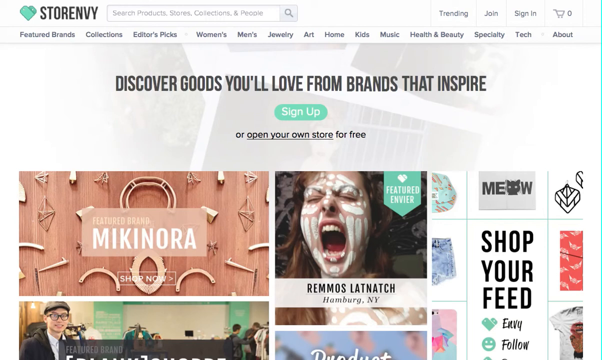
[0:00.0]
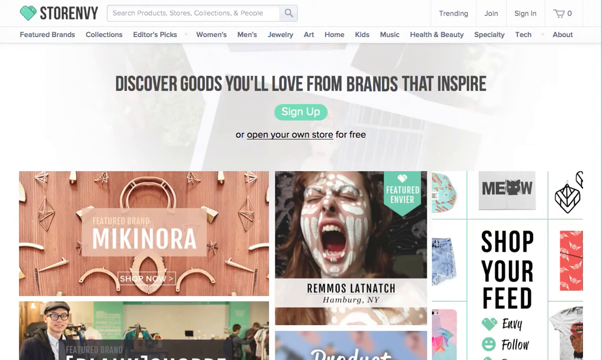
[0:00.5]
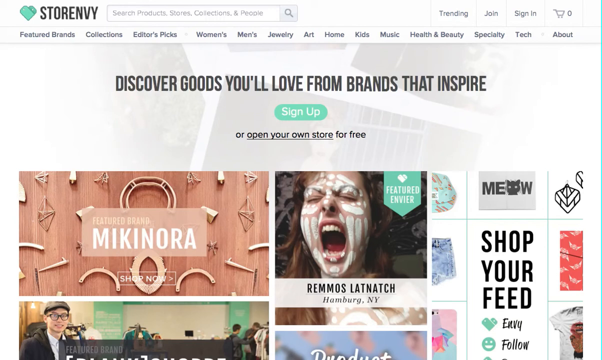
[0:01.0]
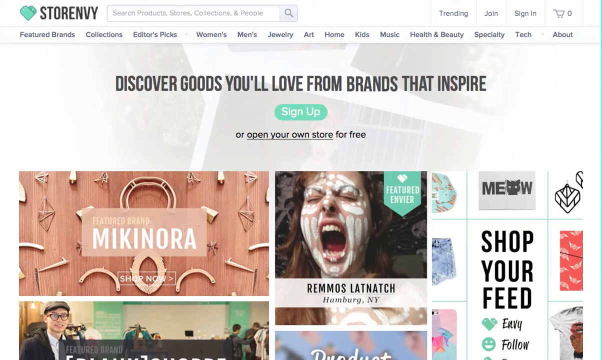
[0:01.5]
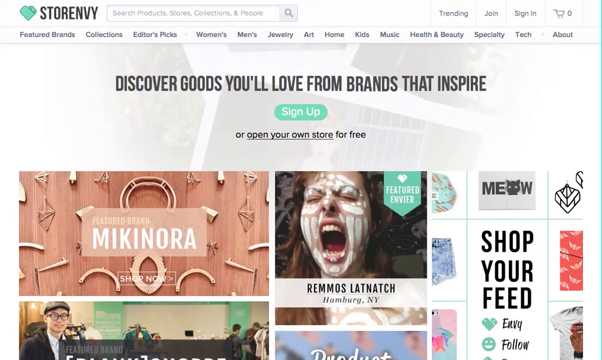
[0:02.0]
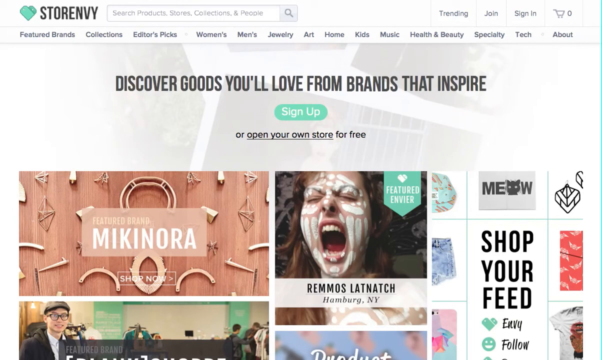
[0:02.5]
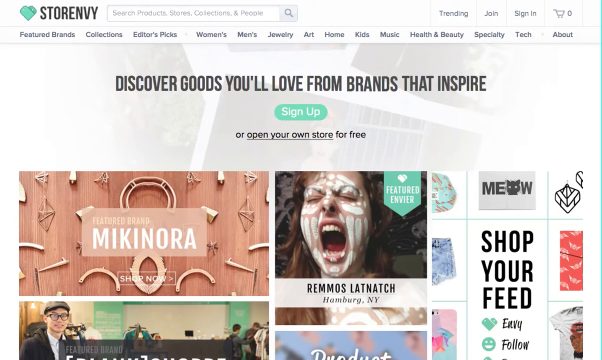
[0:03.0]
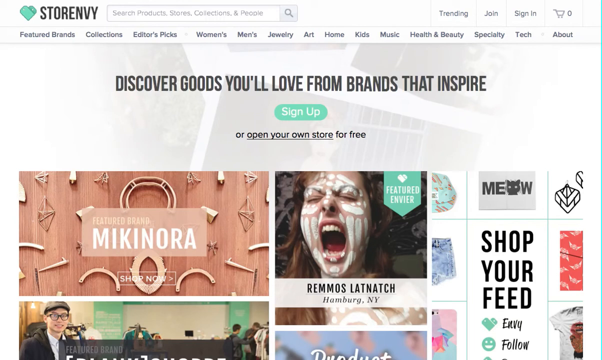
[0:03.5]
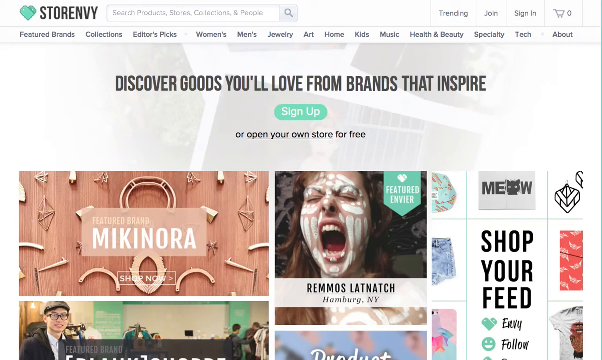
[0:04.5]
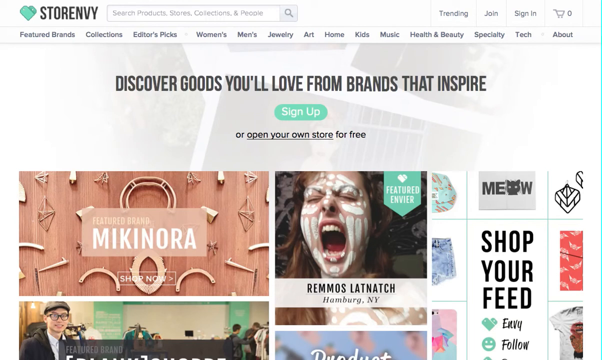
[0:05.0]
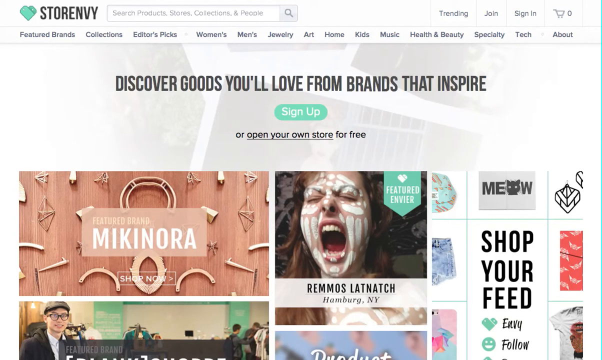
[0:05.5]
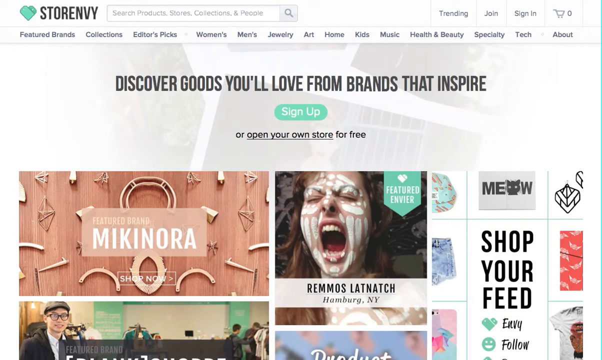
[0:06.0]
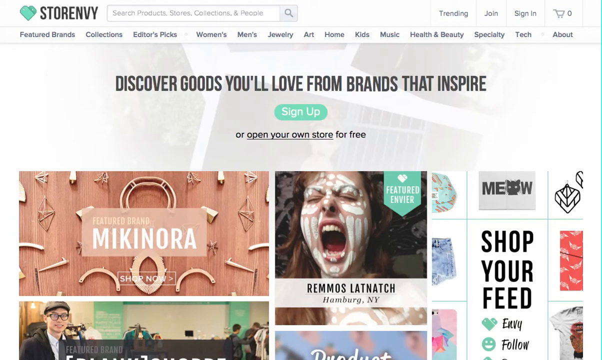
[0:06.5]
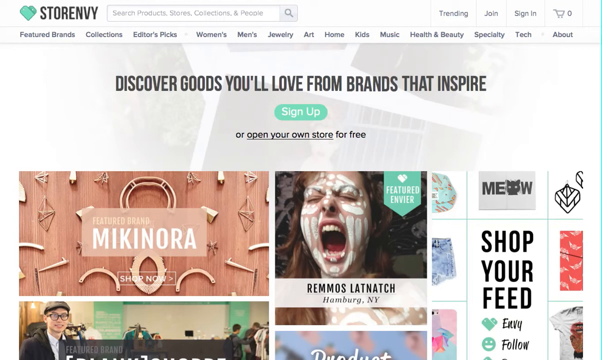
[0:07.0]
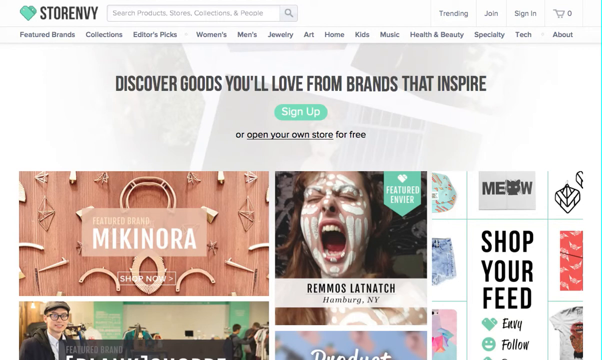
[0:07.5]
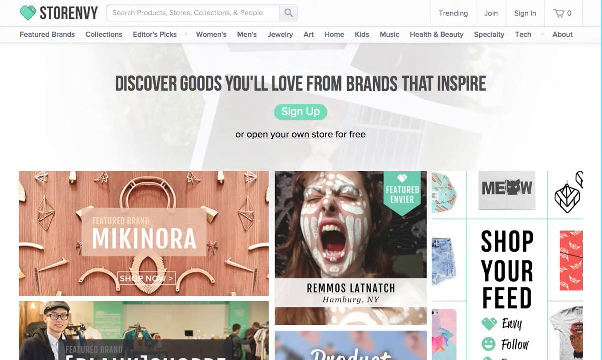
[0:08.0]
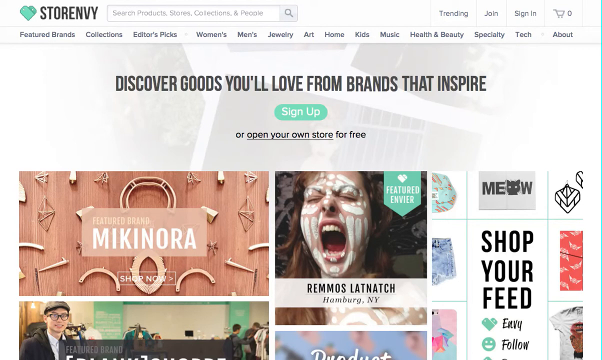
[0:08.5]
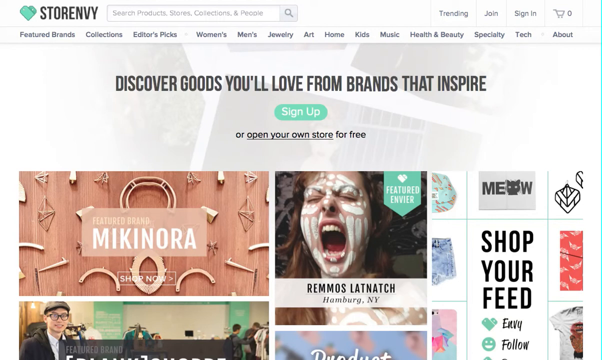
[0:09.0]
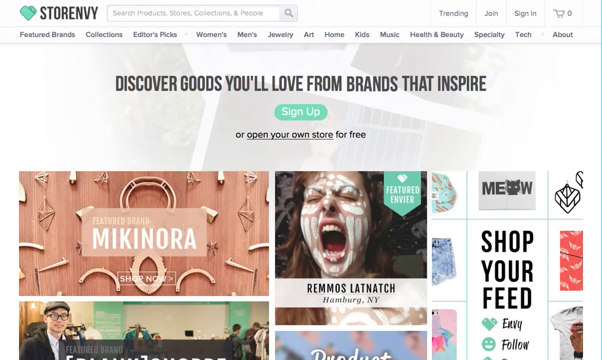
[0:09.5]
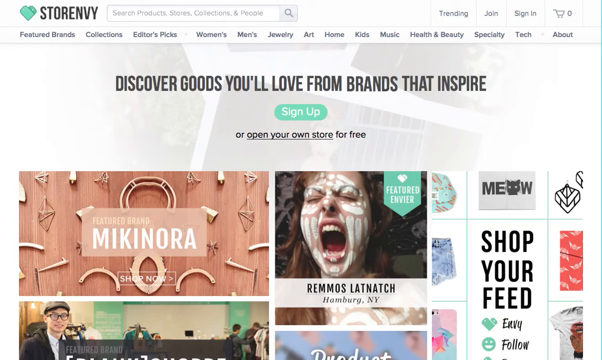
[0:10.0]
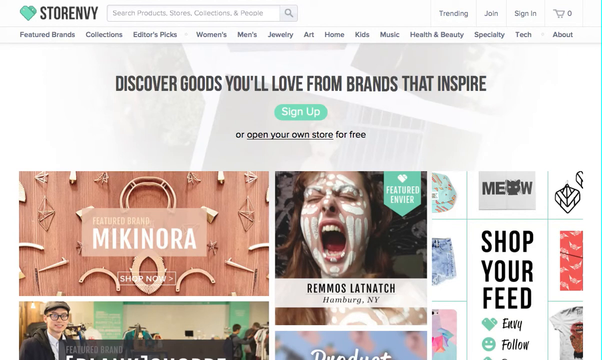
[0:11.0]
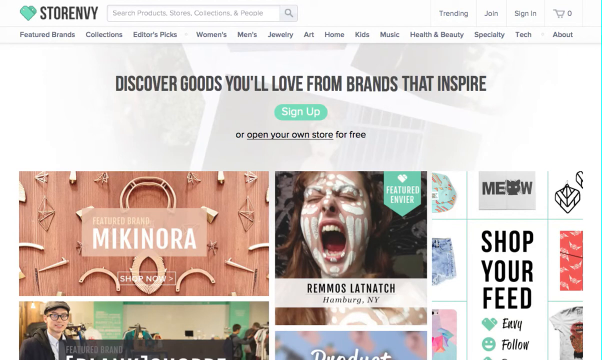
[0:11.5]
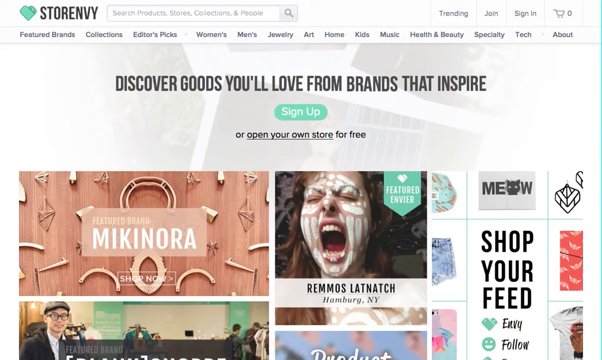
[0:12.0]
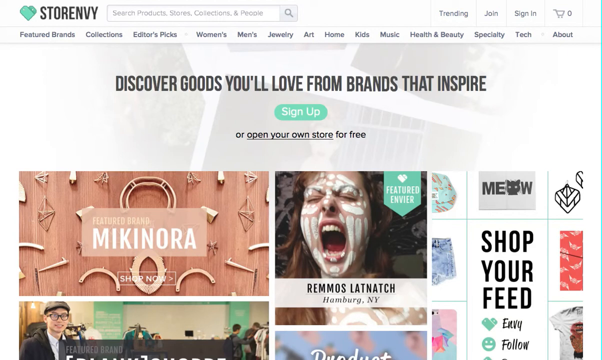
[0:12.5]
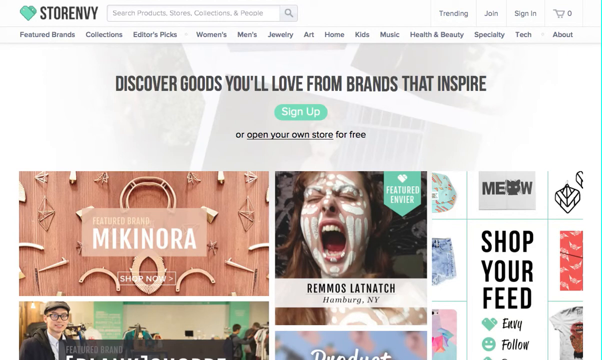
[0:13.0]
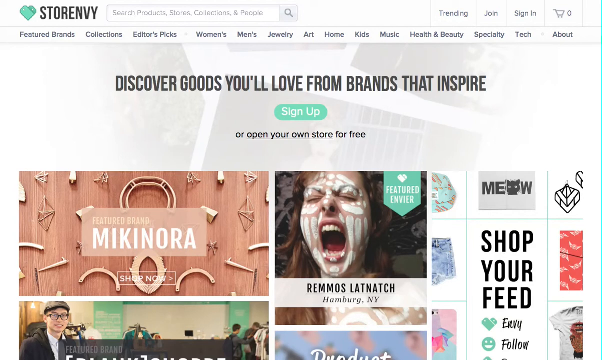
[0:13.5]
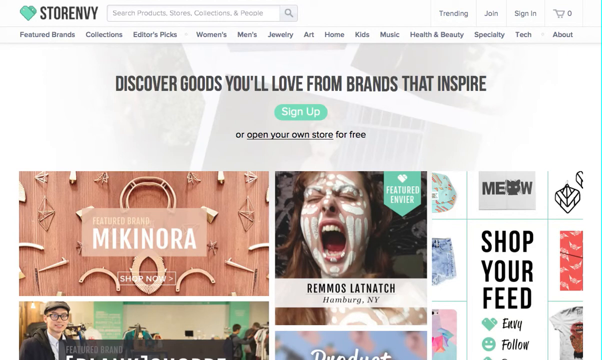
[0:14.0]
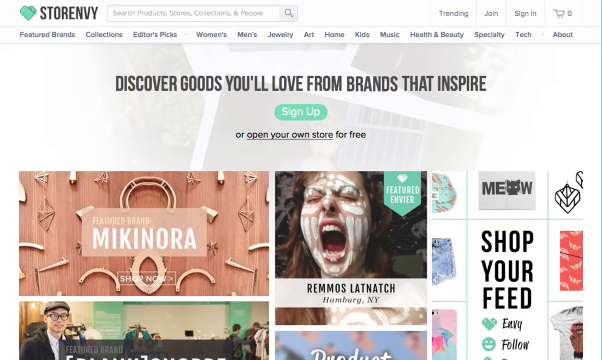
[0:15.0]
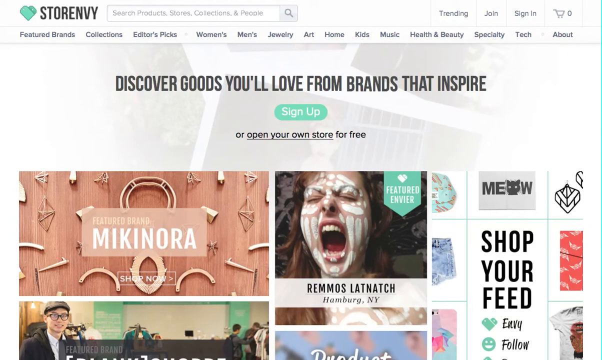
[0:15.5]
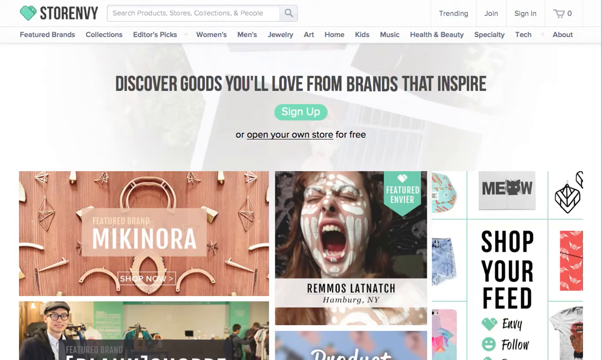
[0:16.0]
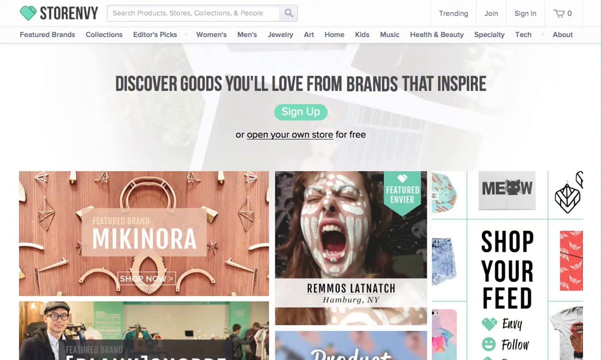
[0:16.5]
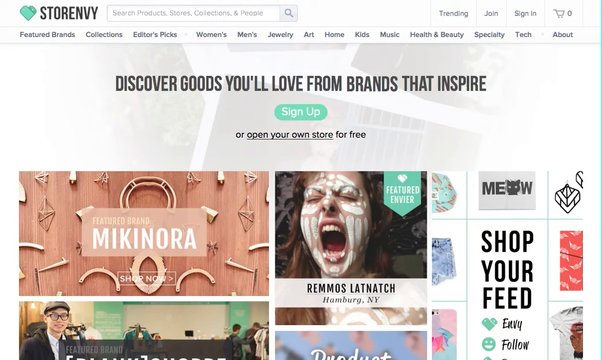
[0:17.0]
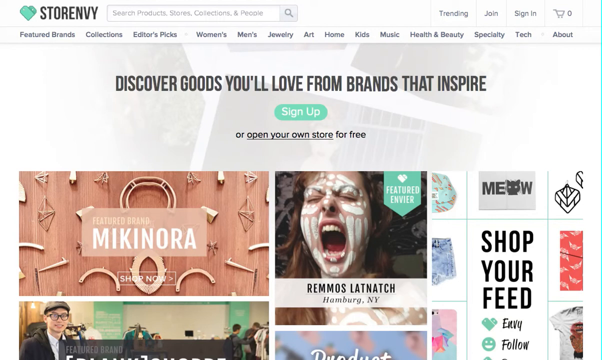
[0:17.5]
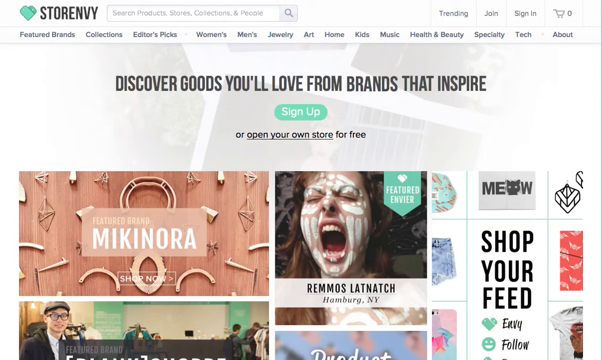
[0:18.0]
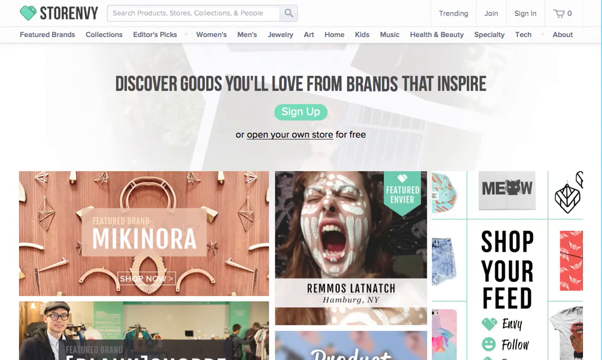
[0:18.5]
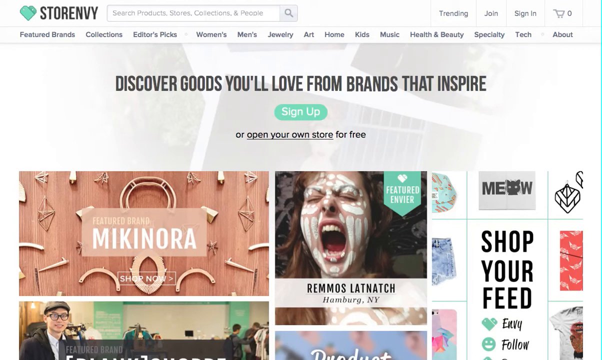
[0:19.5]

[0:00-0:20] This advert opens on a static screenshot of a website called Store Envy. A banner at the top carries the text "Discover goods you'll love from brands that inspire," along with a sign out button, and underneath it reads "or open your own store for free." Below that is a collage, or wall, of different pictures with text. One reads "featured brand, Makinora" on a background of what looks like different patterns of trinkets and things. Next to it is a "featured envier": a woman's face with her mouth wide open, her eyes closed and face paint on. To the right of that is the text "shop your feed, envy, follow, meow." Along the top are the store logo, a search bar, join and sign in buttons, a basket icon, and a header with many categories, including women's, men's, jewelry, art, home, kids and music. This opening part of the video appears to be just the static screenshot.